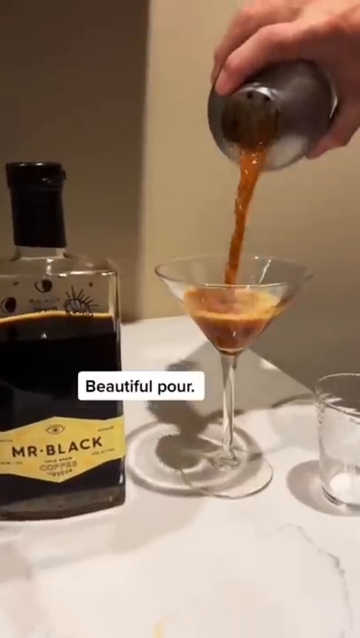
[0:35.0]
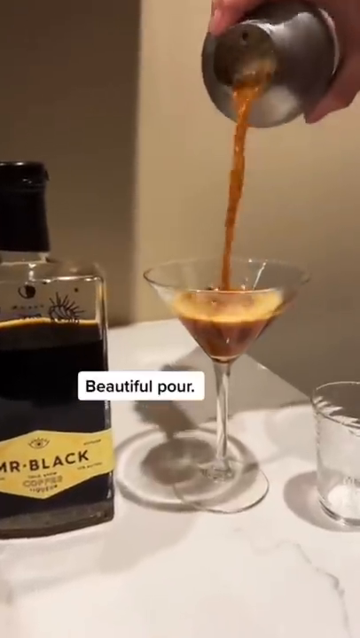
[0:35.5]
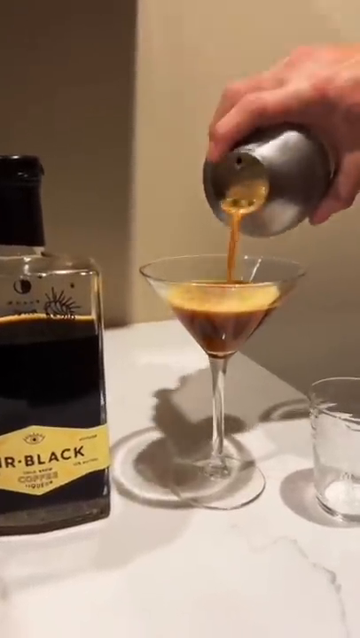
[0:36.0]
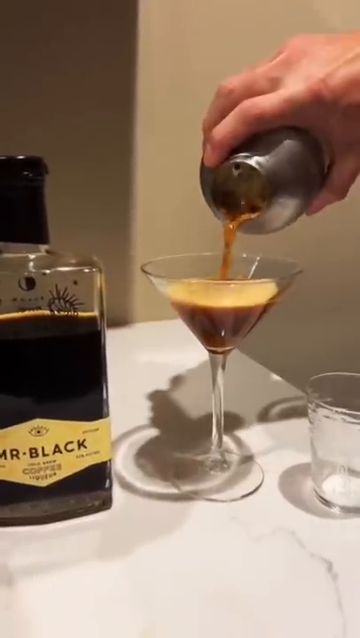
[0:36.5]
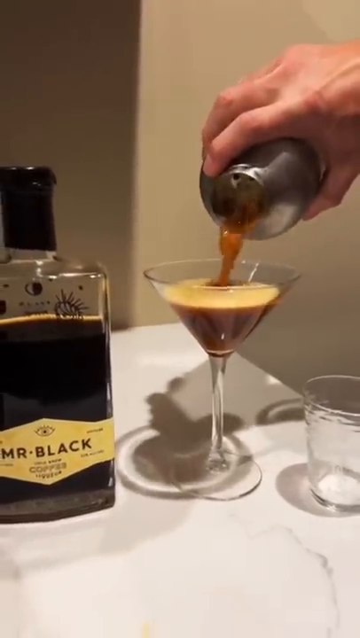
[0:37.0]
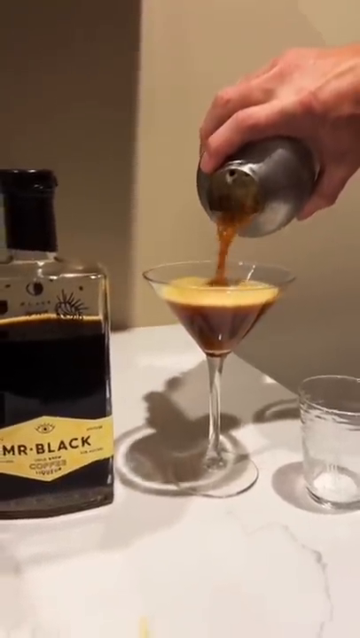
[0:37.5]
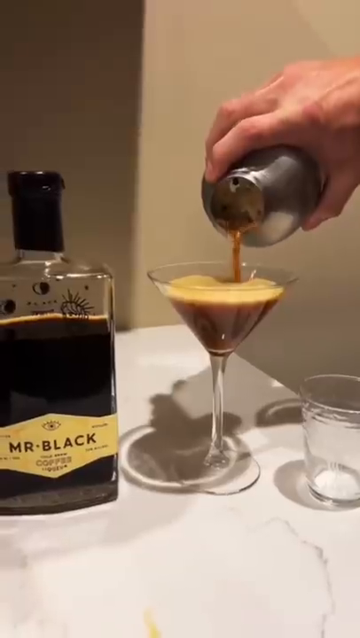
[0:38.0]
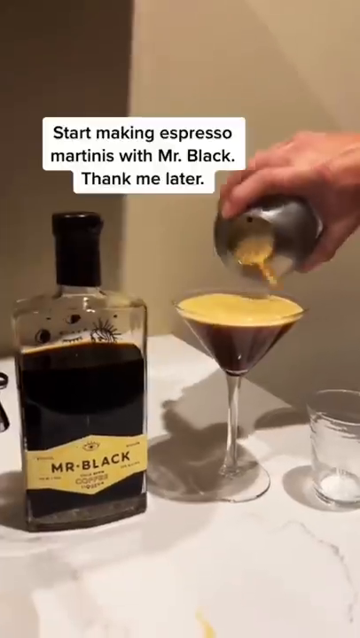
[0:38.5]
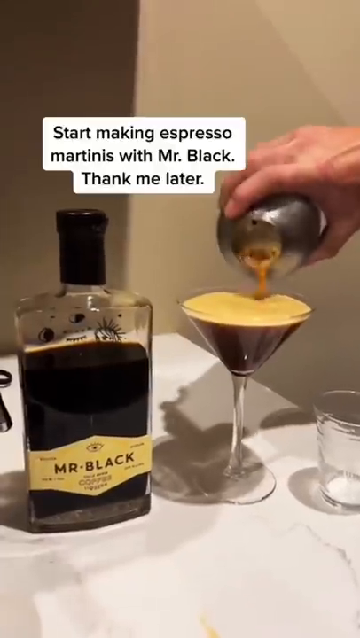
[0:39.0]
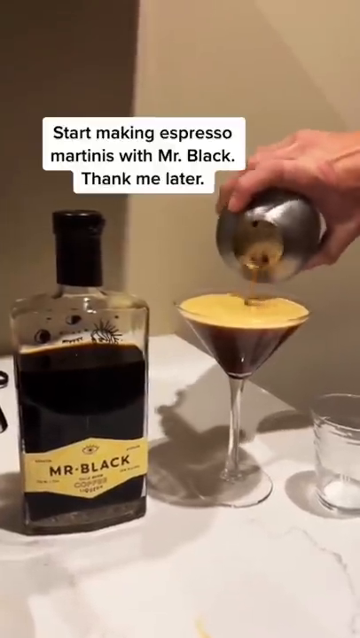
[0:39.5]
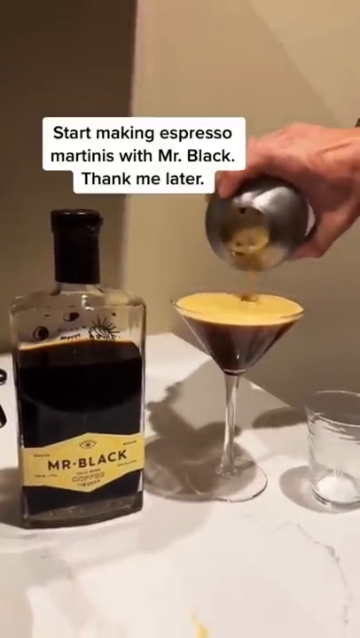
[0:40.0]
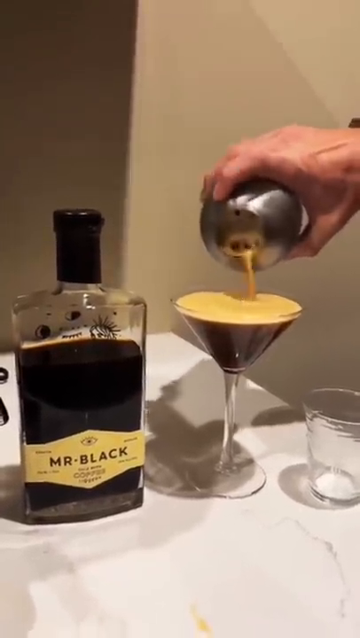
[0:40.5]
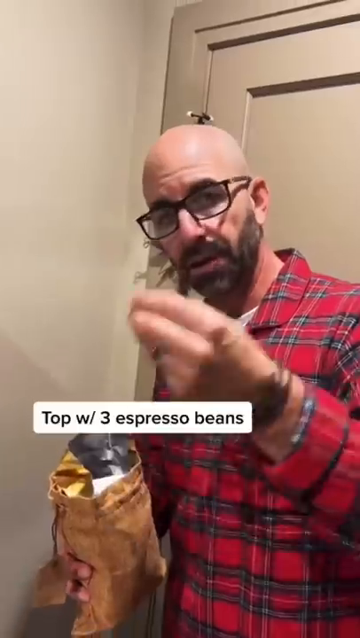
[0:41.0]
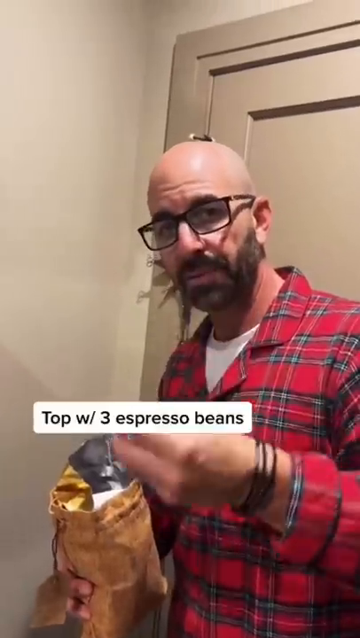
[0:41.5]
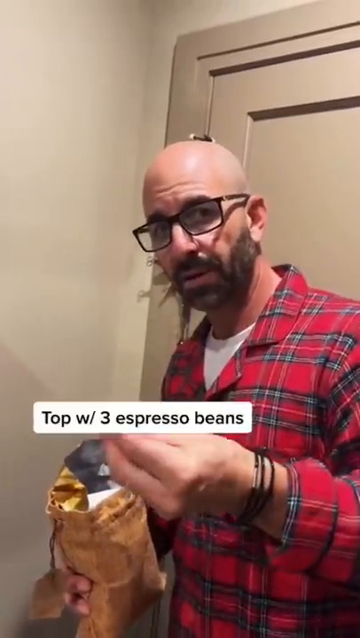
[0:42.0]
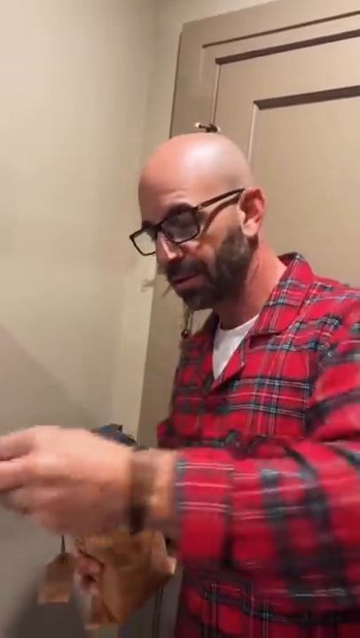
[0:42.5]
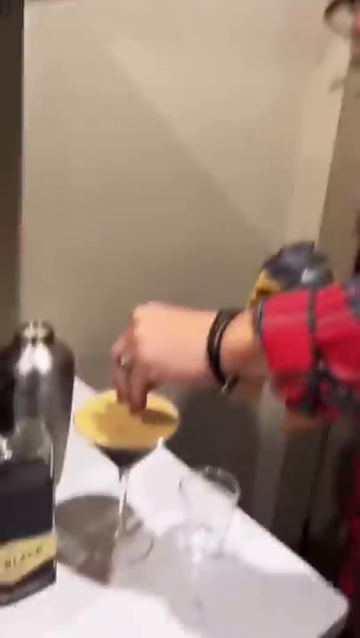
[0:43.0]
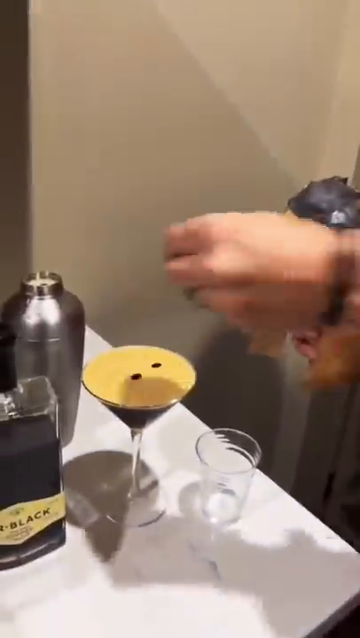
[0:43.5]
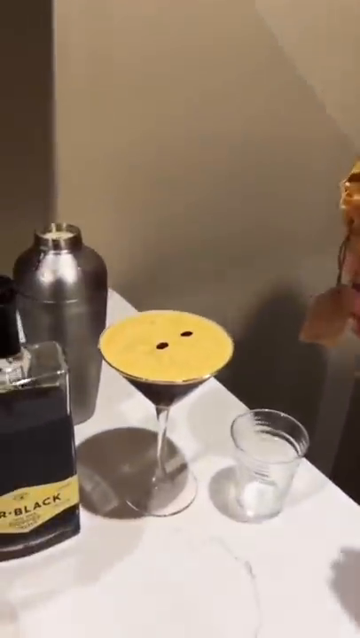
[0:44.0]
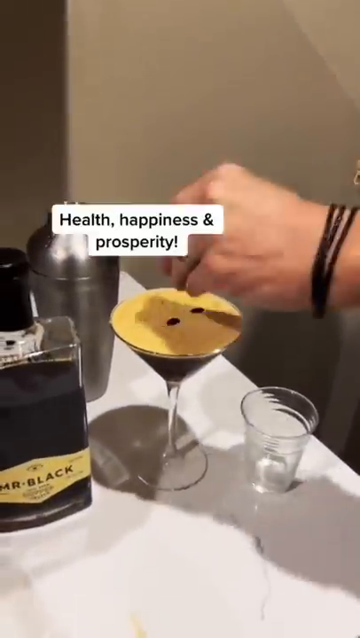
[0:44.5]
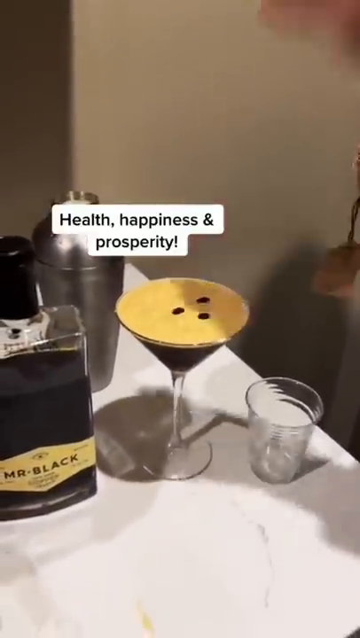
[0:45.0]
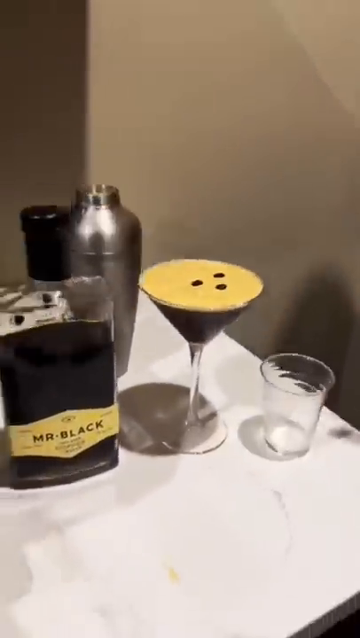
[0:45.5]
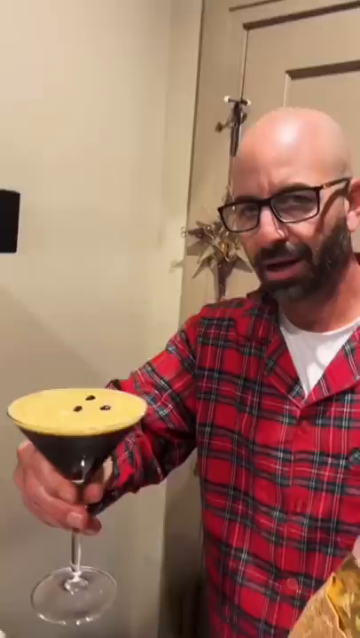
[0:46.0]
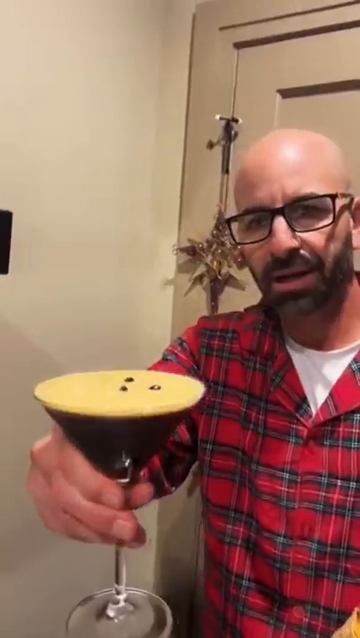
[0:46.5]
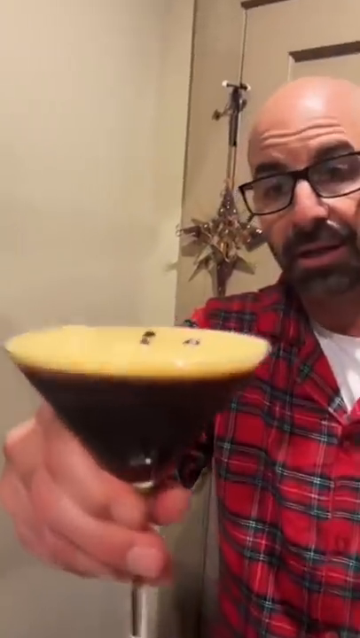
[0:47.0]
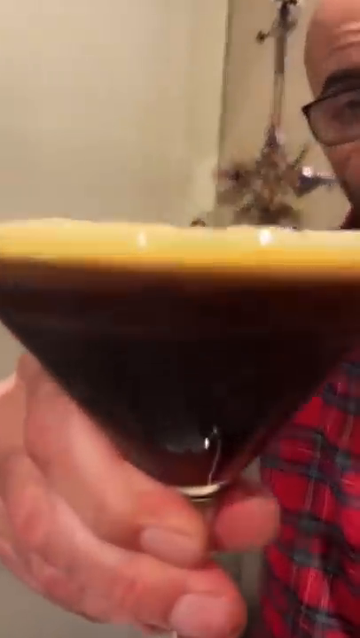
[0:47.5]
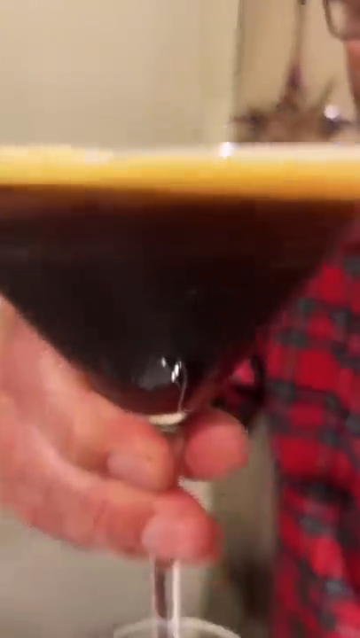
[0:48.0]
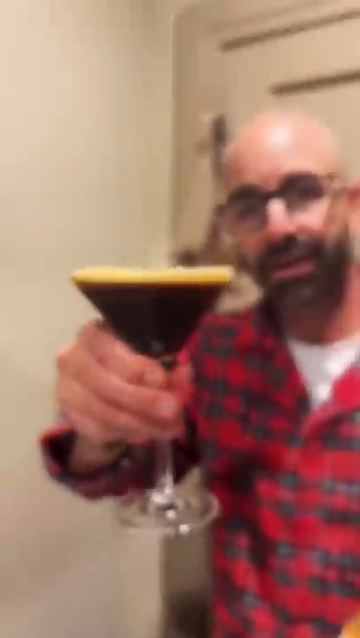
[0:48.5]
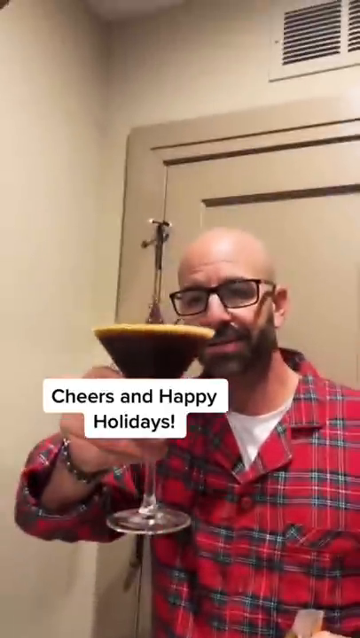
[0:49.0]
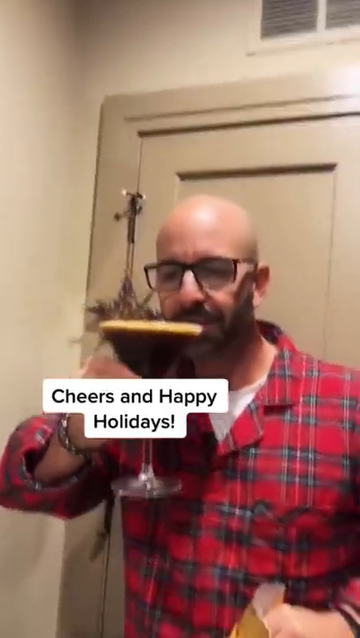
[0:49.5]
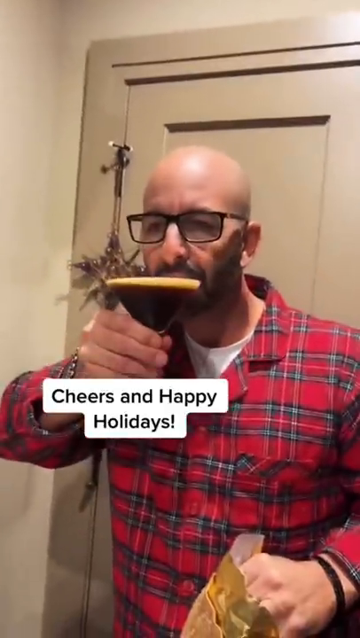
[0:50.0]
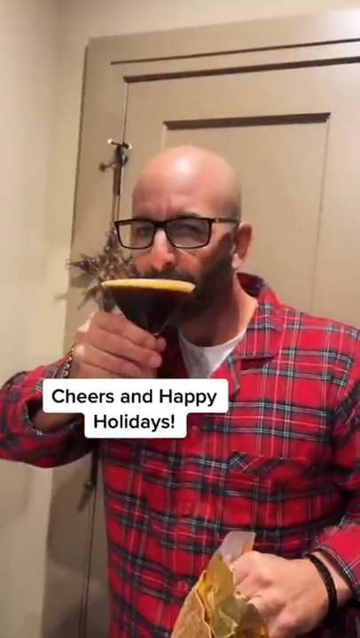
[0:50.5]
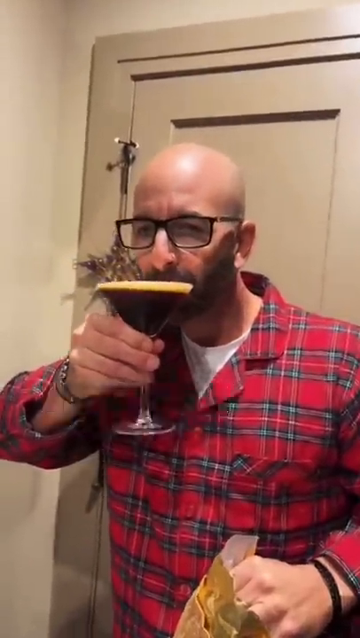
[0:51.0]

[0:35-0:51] The man fills his glass to the very brim with the martini kind of substance from the shaker. Superimposed text reads "start making espresso martinis with Mr. Black, thank me later". The clear martini glass is filled, with a yellowish, kind of foamed top, and the bottle of Mr. Black is on the left. He really shakes the shaker to get the last foamy bit out, and text appears reading "top with three beans, health, happiness and prosperity". At the end he brings the martini glass toward the camera, then back to his mouth, and takes a sip as the text "cheers, happy holidays" appears.